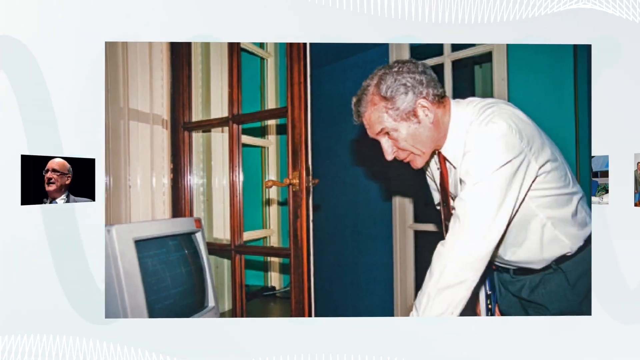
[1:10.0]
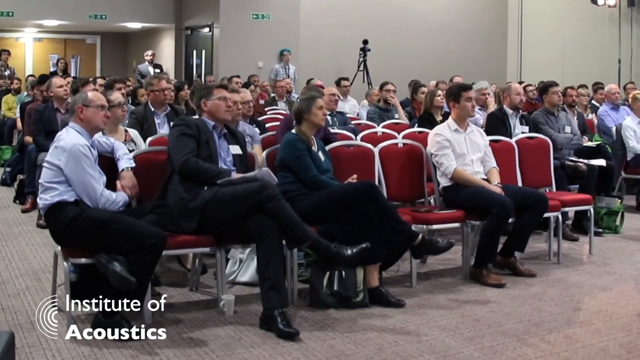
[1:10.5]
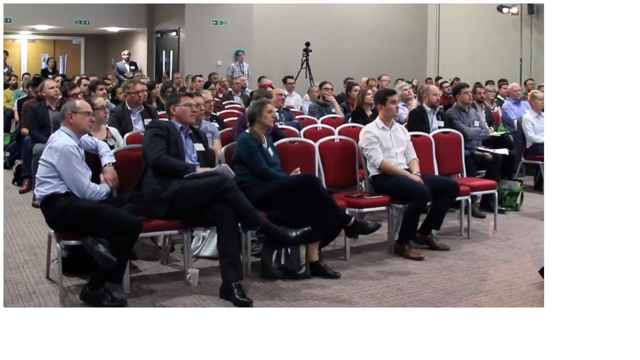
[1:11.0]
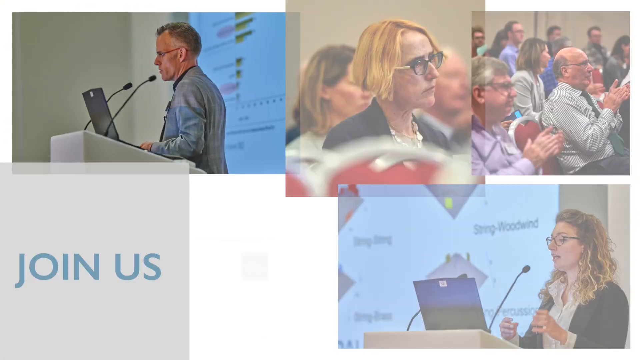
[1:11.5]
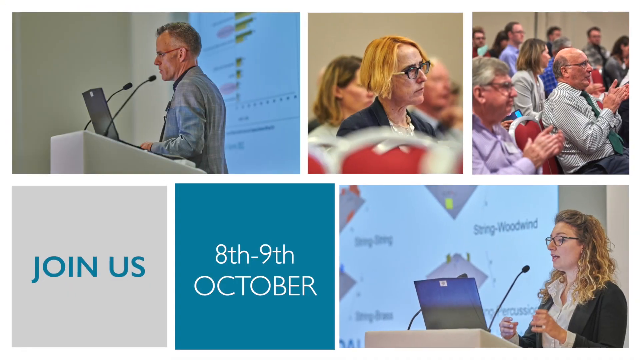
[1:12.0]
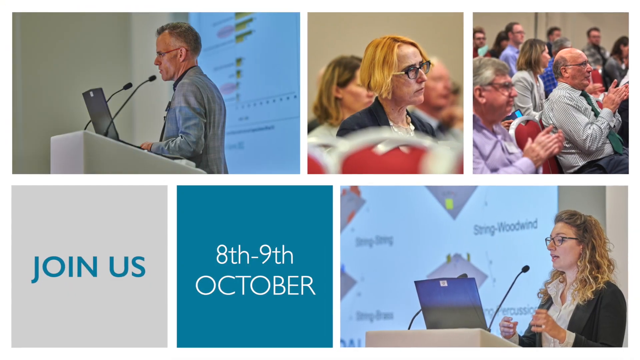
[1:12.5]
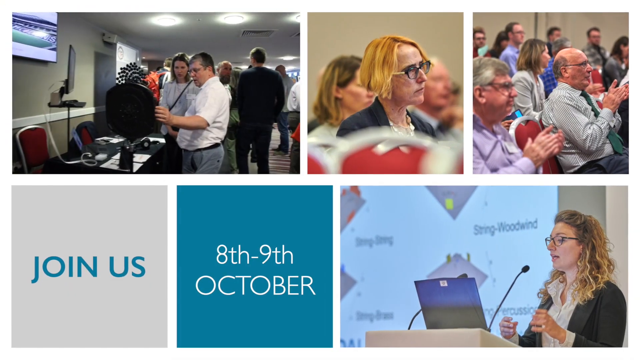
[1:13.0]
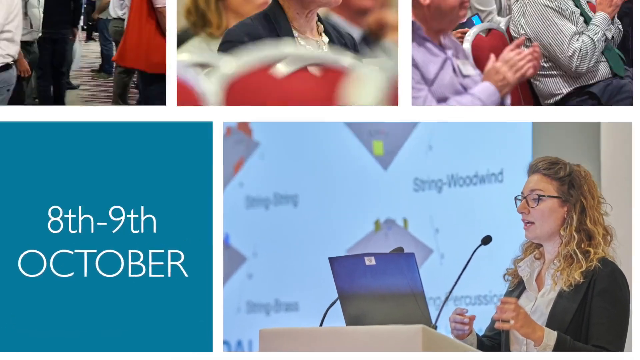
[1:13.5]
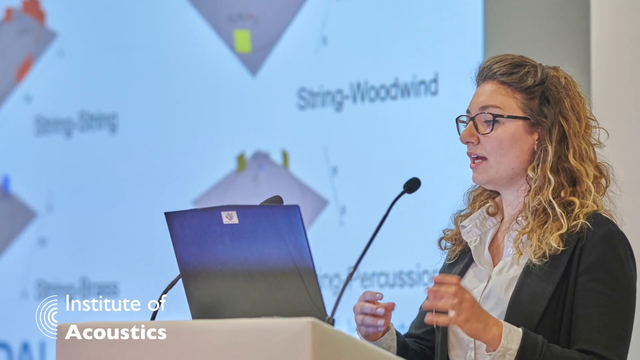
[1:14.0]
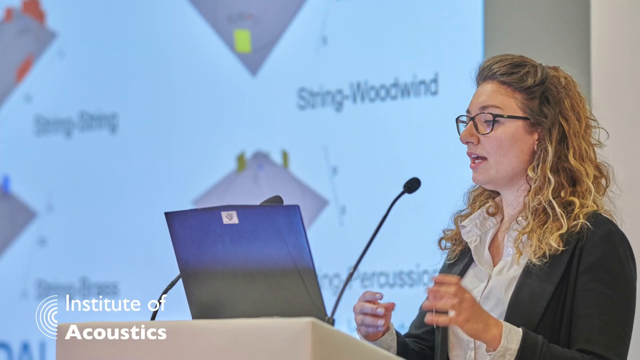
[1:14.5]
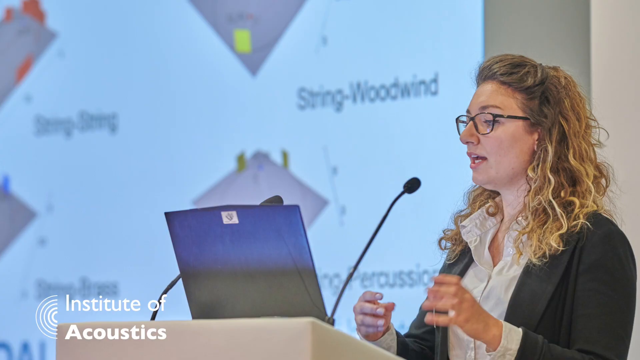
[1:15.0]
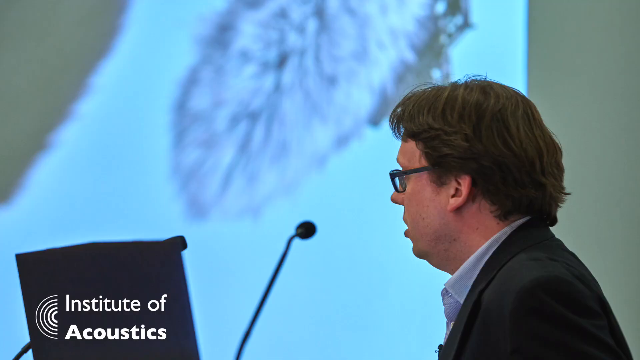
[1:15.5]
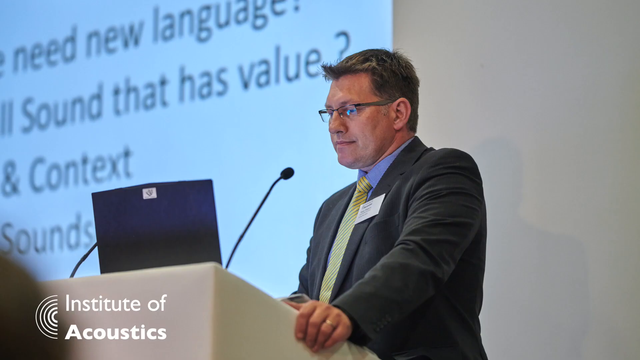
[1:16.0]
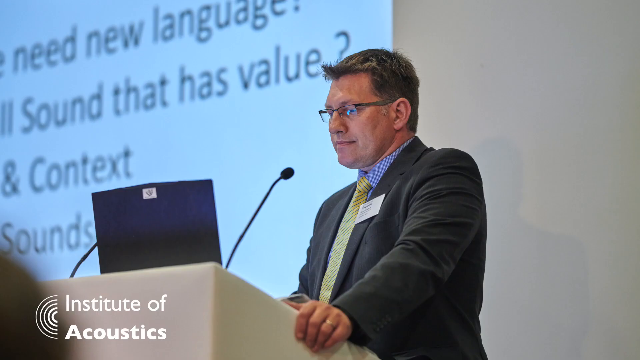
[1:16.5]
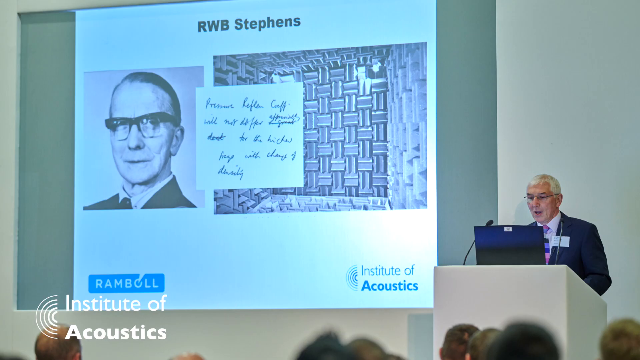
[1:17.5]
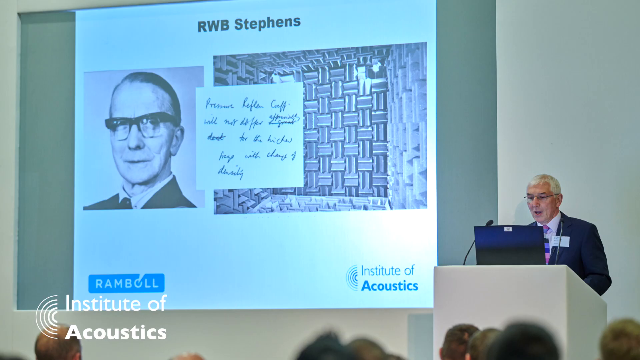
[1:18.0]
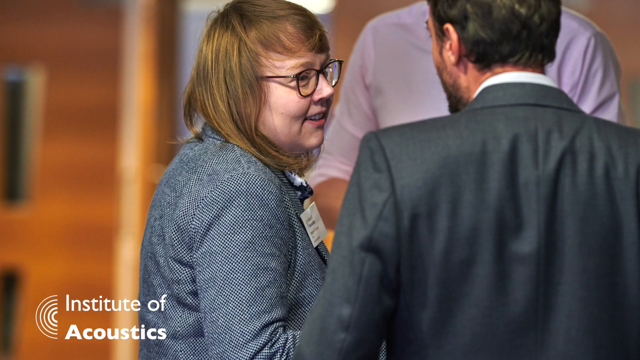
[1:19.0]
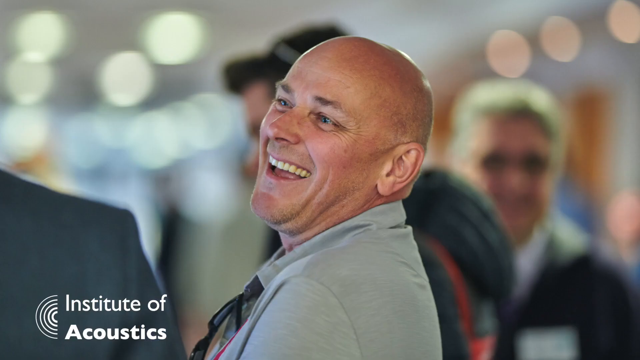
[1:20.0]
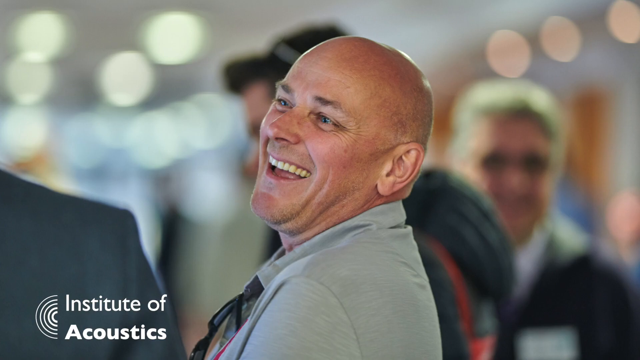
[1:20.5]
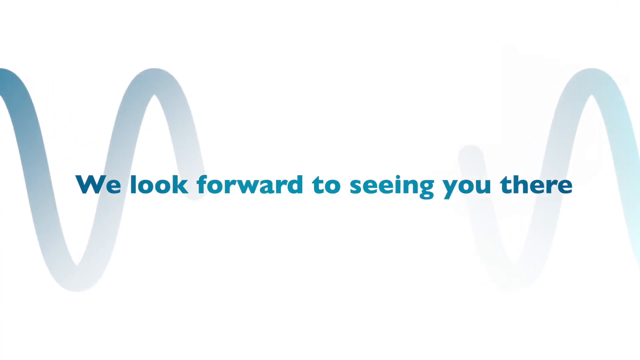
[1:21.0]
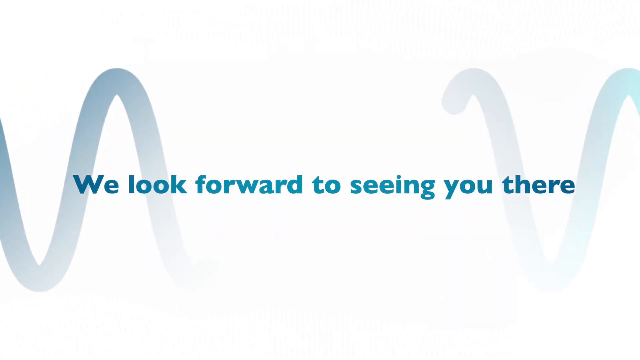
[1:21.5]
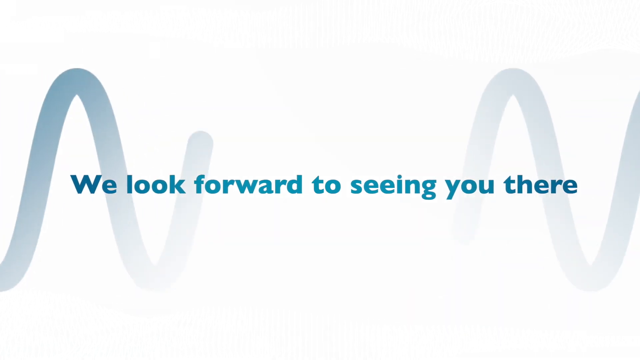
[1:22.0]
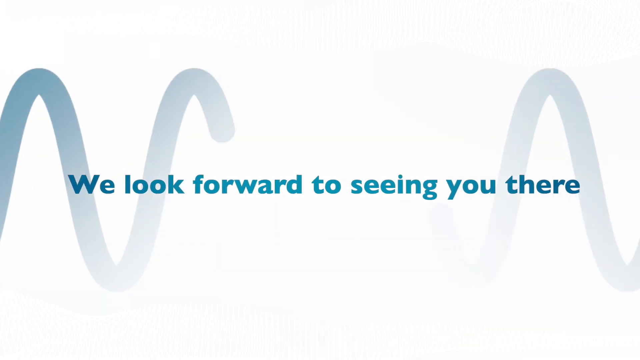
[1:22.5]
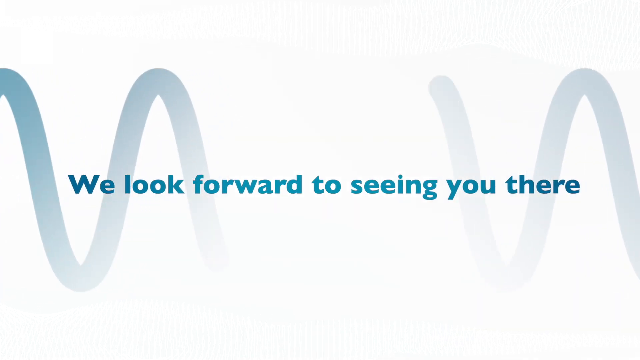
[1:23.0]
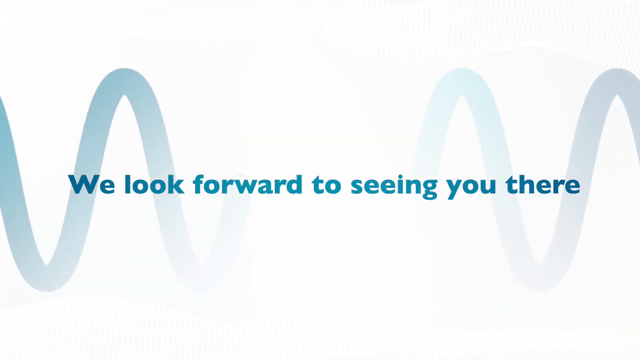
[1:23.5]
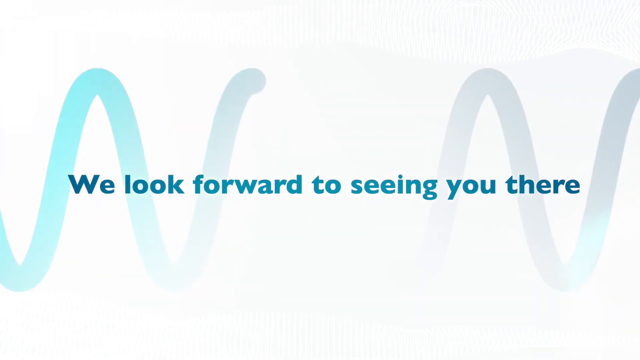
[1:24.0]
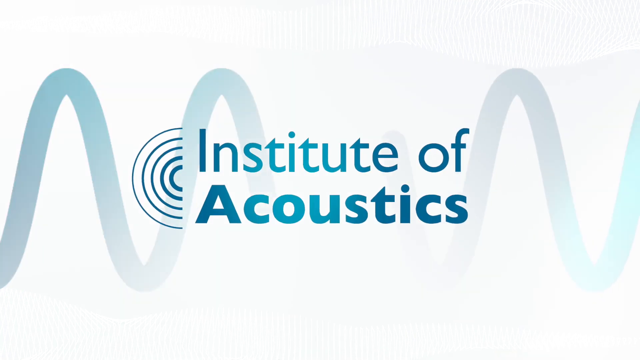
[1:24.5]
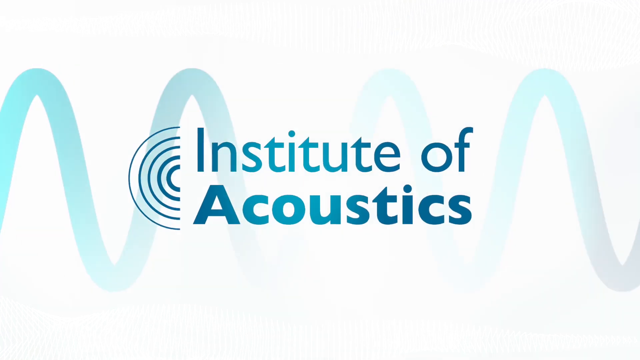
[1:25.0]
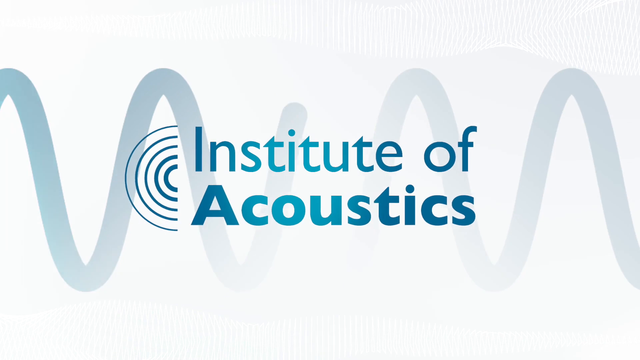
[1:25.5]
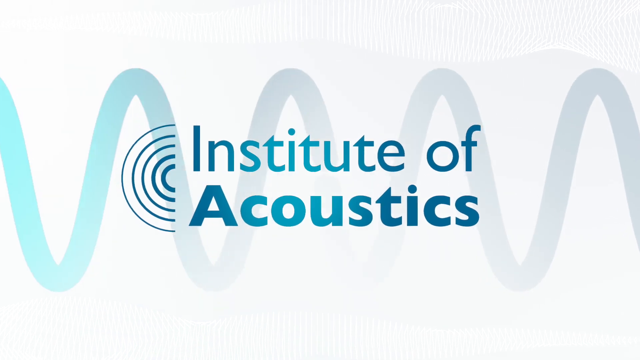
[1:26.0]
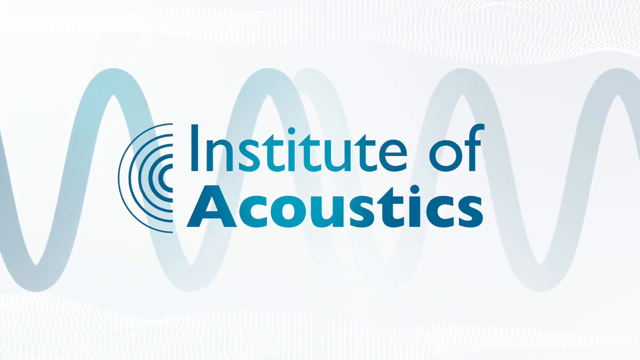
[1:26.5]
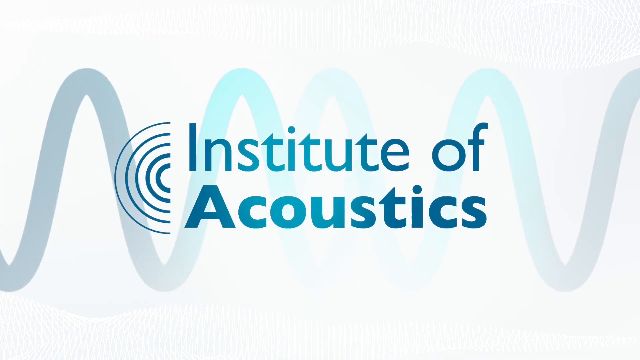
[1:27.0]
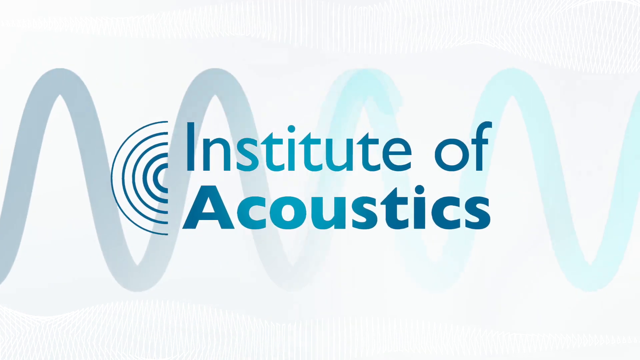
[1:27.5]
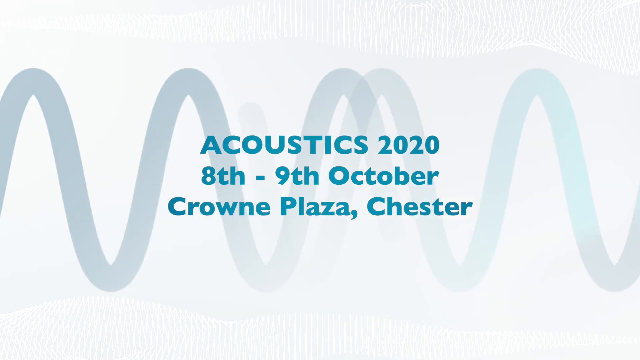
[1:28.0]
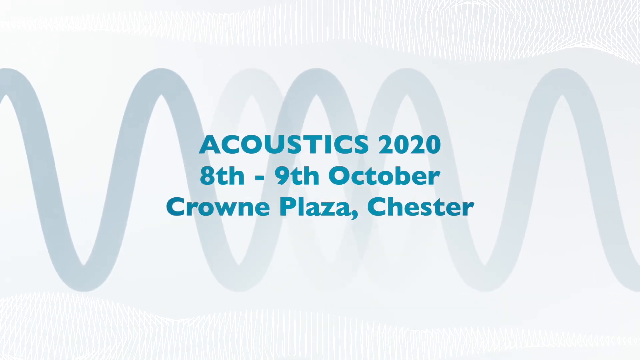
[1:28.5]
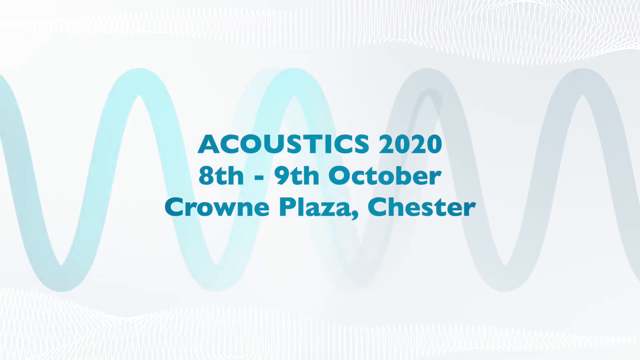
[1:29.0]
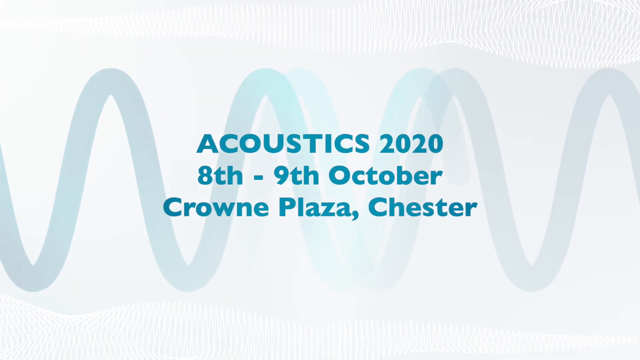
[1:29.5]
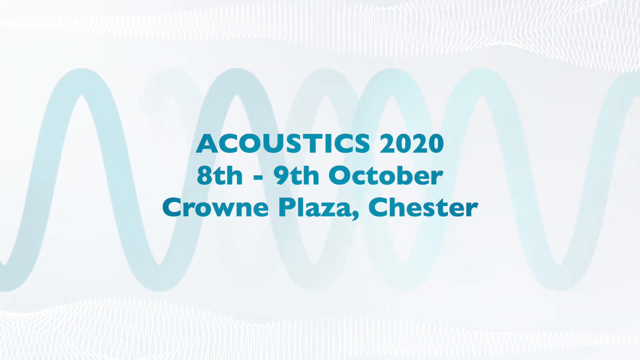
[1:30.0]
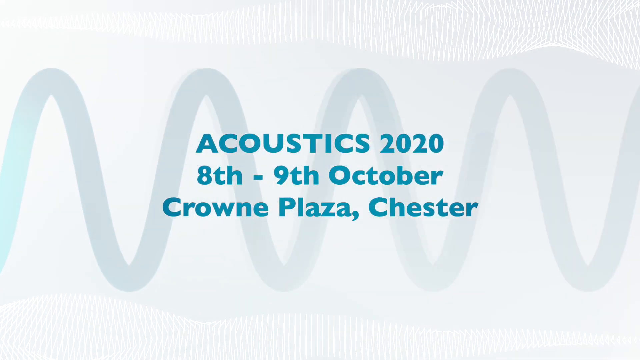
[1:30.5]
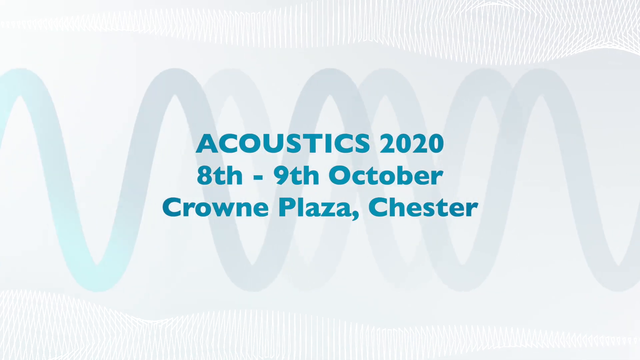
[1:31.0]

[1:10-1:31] A split screen appears, with text possibly reading "join us, the 9th of October." Text reads "we look forward to seeing you there" over a background that looks like a small sound wave. At the end, "Institute of Acoustics" appears in blue. The date and location are also shown: 2020, the 8th through the 9th of October, Crowne Plaza, Chester.